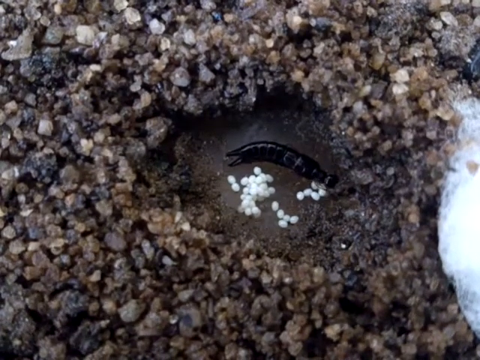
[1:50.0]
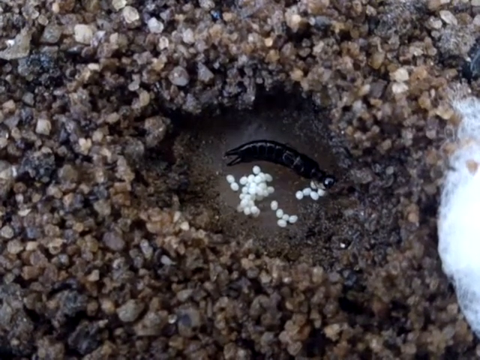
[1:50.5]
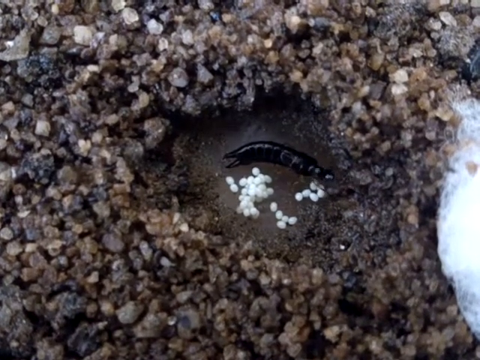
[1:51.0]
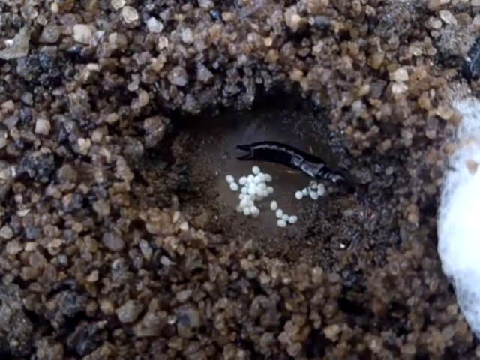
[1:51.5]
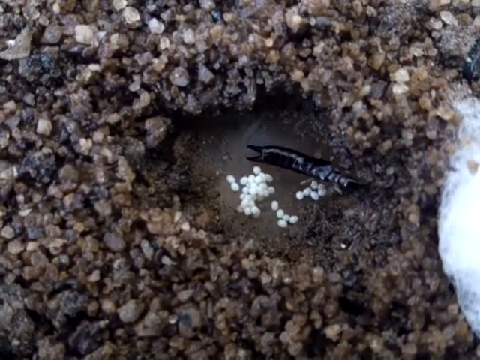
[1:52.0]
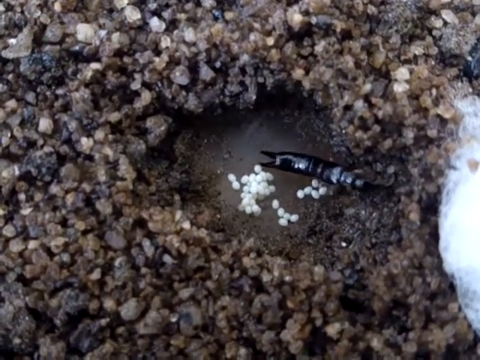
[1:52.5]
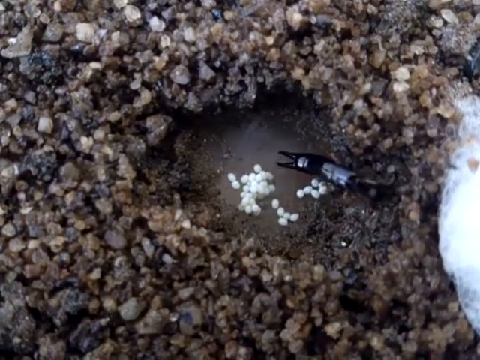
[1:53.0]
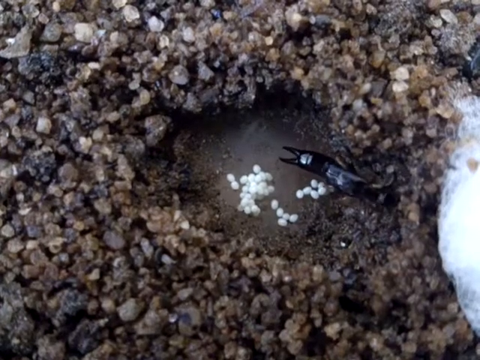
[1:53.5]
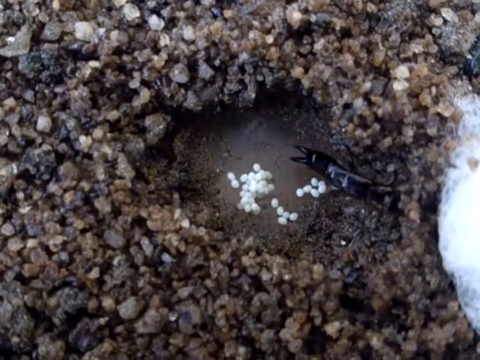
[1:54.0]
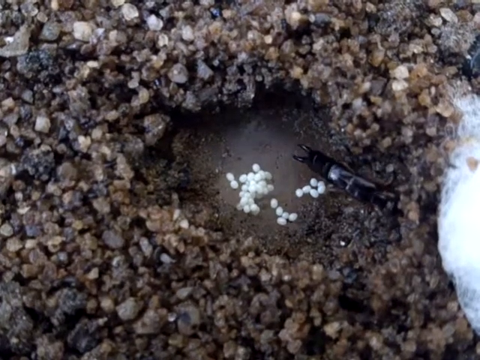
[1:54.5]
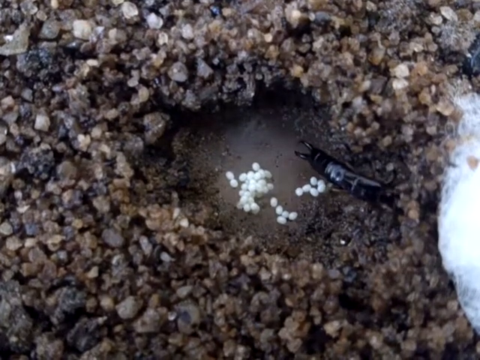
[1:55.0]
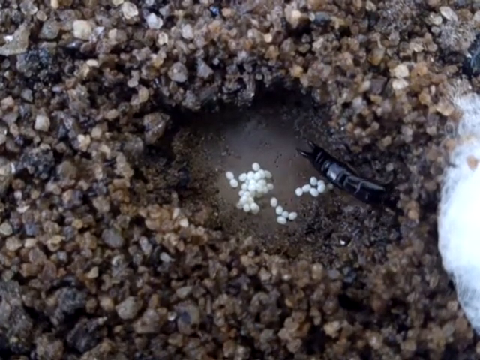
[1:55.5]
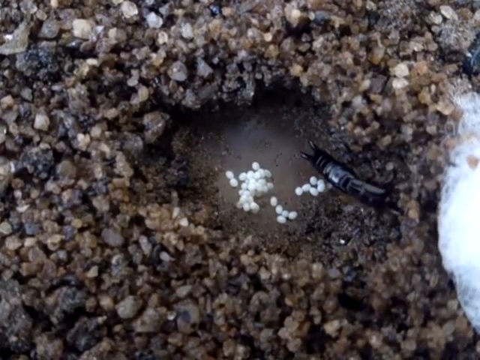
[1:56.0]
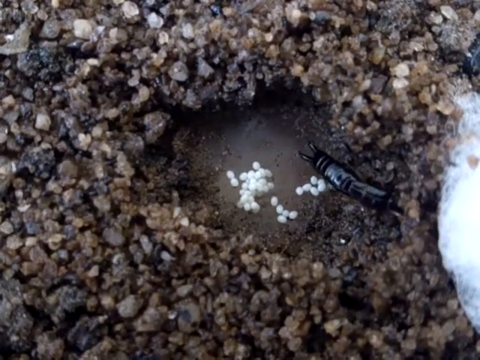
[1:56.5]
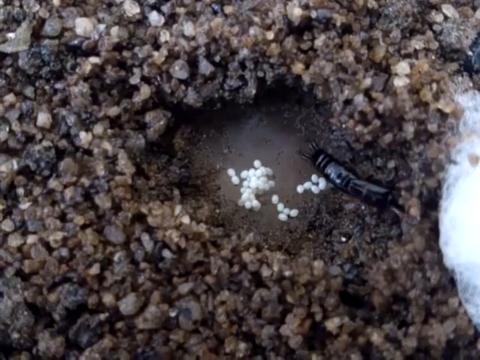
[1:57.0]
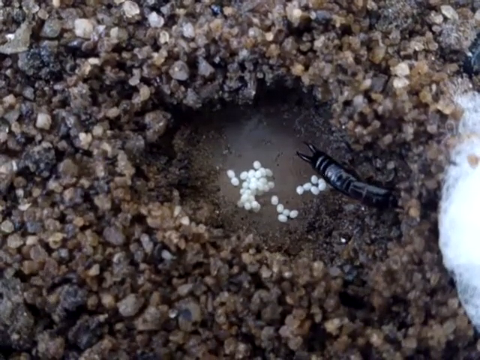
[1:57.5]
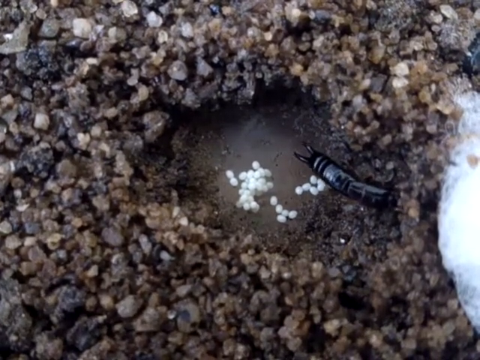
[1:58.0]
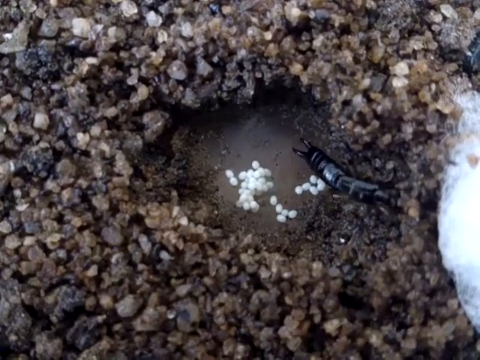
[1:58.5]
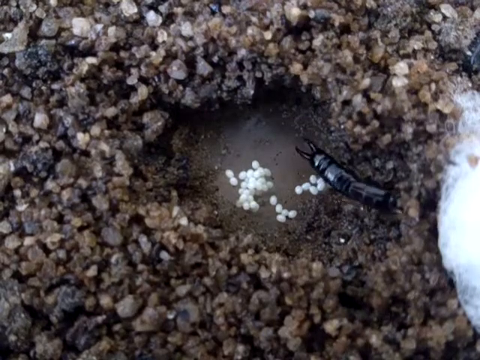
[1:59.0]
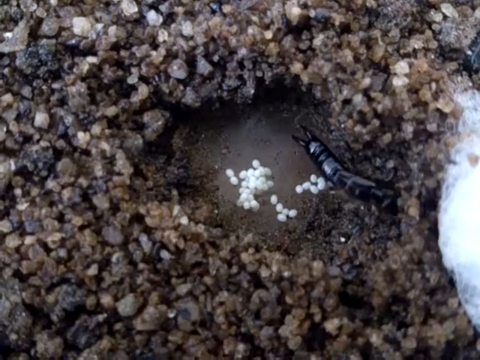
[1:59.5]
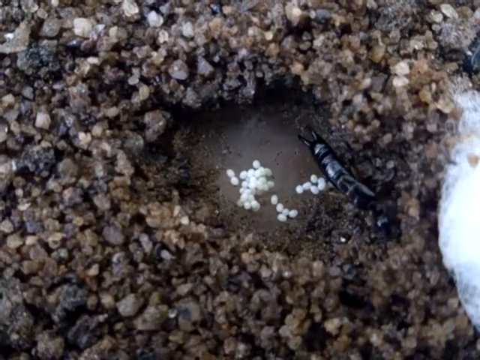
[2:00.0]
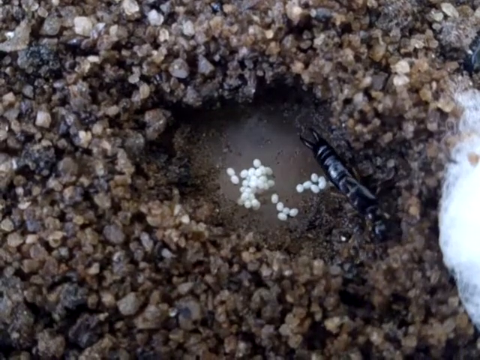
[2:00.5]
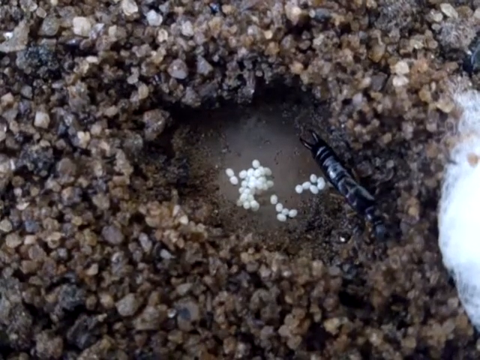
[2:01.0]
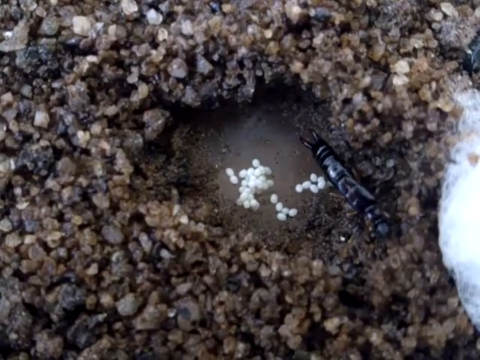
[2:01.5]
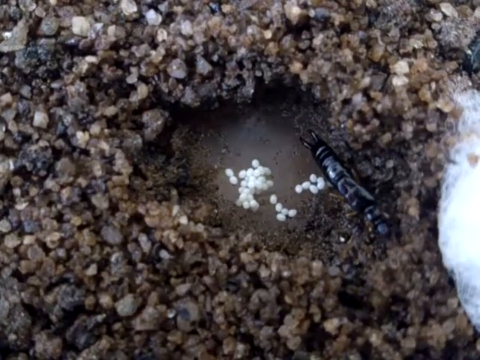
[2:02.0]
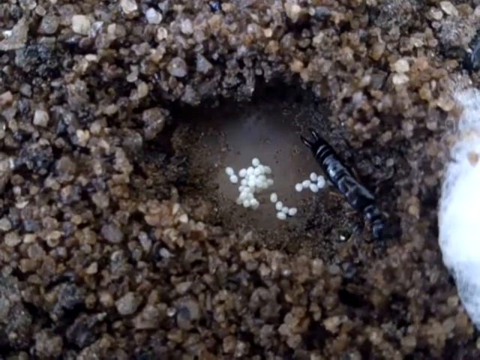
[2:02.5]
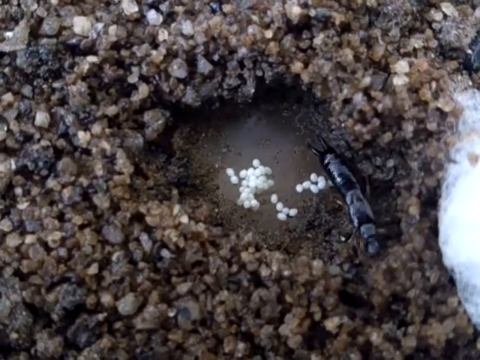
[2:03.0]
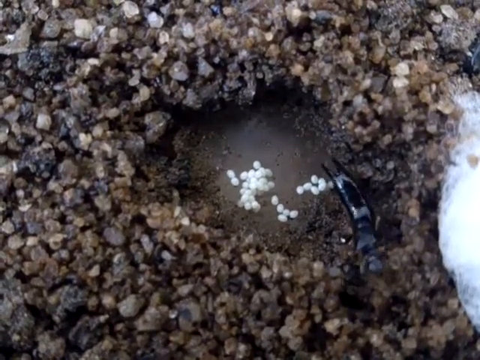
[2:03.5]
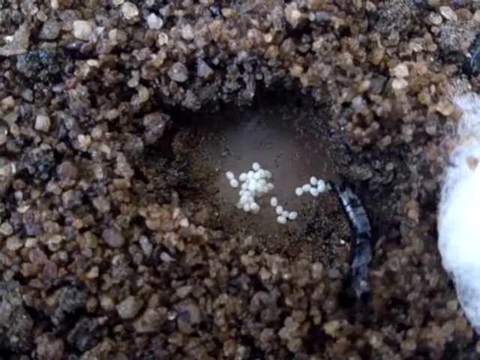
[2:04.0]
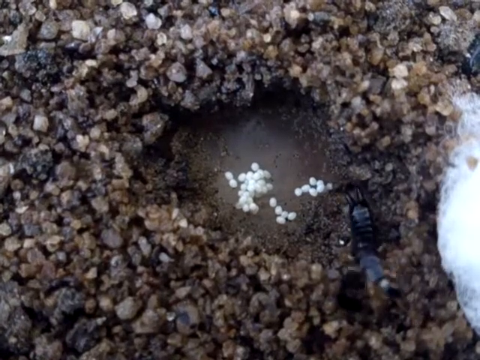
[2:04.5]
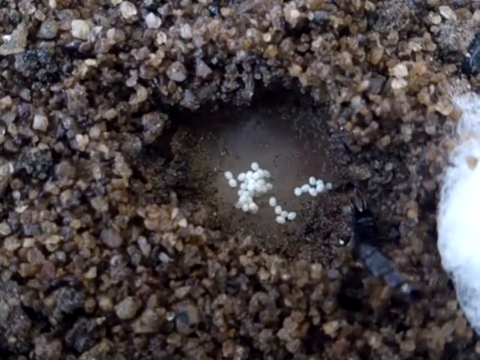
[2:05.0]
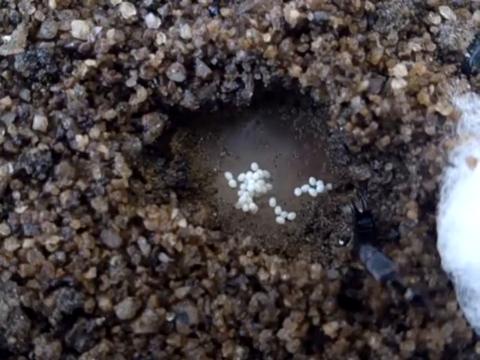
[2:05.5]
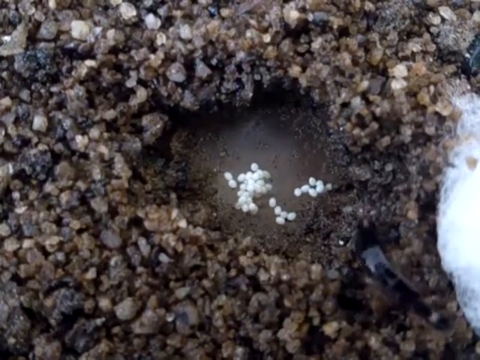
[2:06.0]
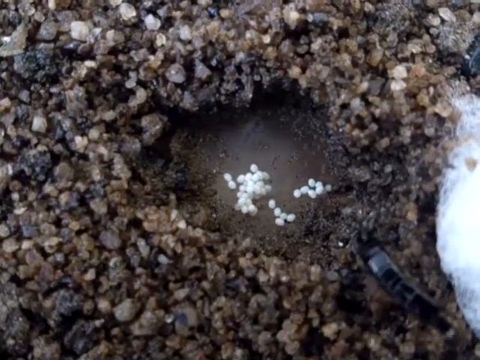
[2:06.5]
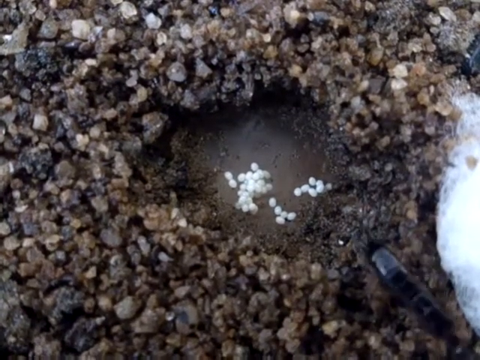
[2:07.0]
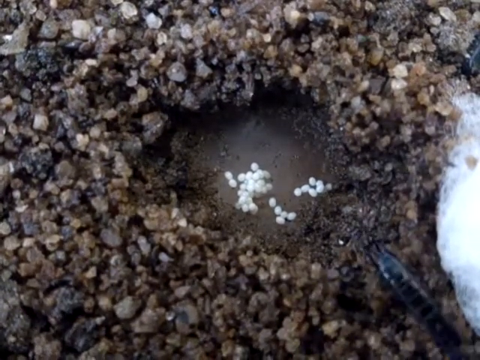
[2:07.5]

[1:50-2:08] A close-up shows very gravelly, muddy ground. Near the center of the screen is an indentation with water in it. In the water are several floating white round objects that appear to be larvae or eggs, and a large insect that appears to have been tending them but now appears to be leaving. The insect slowly crawls out of the pool and appears to crawl away, leaving the little white balls behind. There are probably three dozen of the balls, in one large cluster and three smaller areas. Everything is very wet, as if it has rained recently. The insect is as long as the little pool is wide and very shiny black, with a very long antenna and a pointy area.